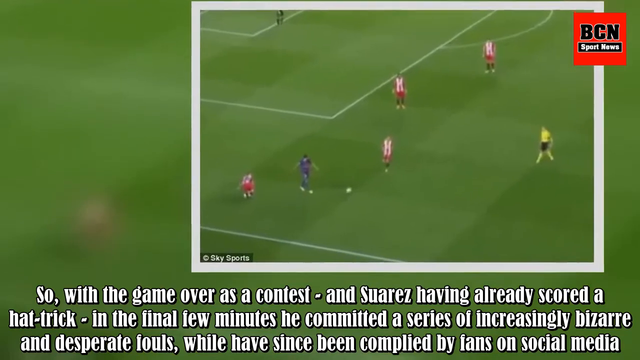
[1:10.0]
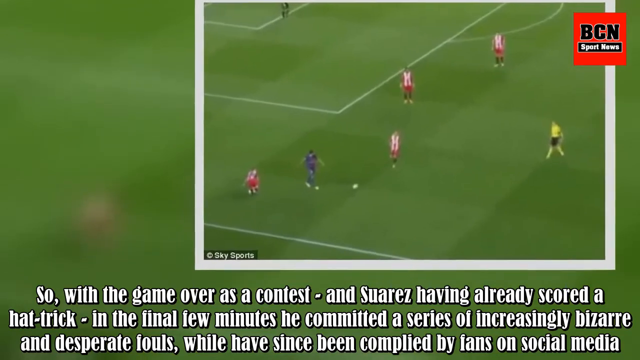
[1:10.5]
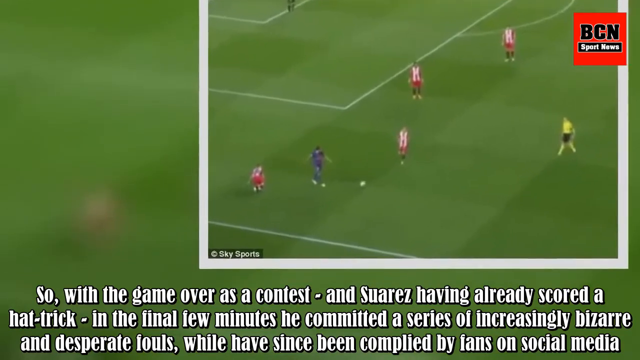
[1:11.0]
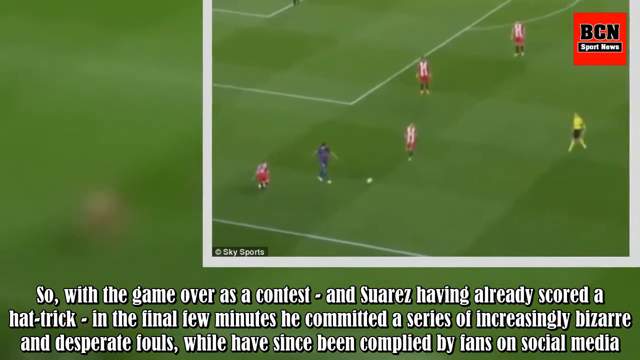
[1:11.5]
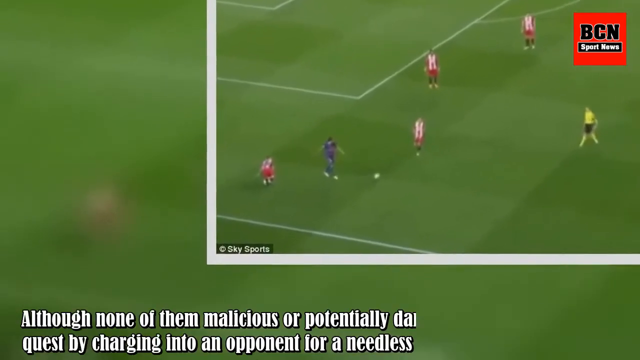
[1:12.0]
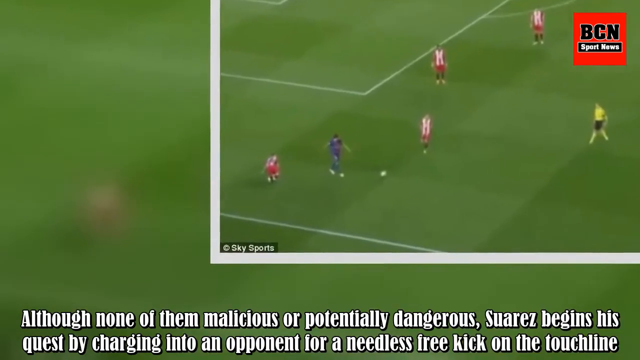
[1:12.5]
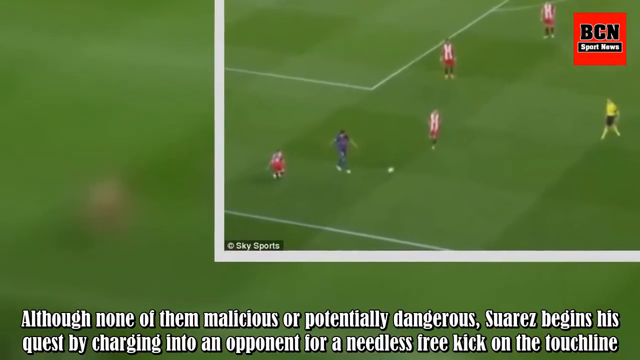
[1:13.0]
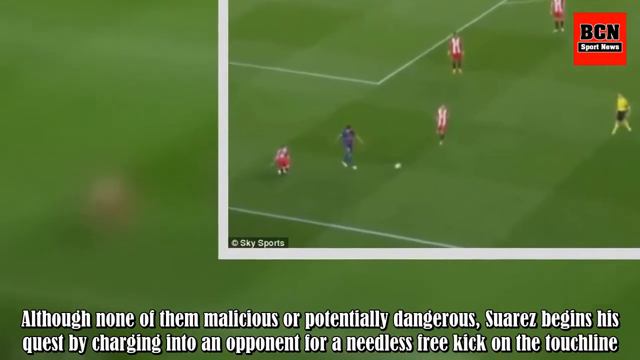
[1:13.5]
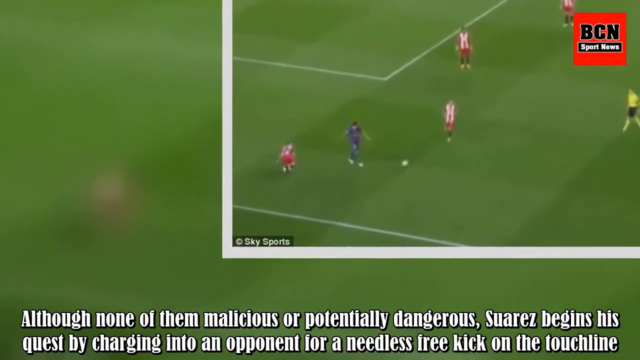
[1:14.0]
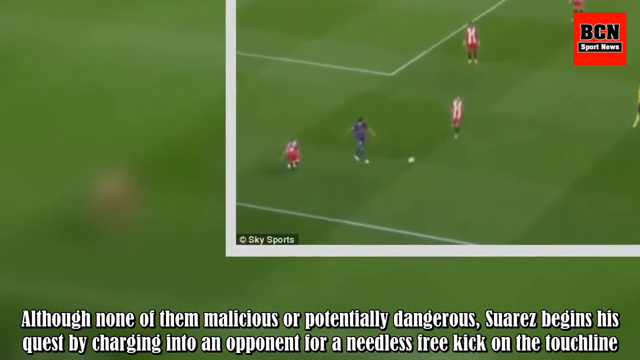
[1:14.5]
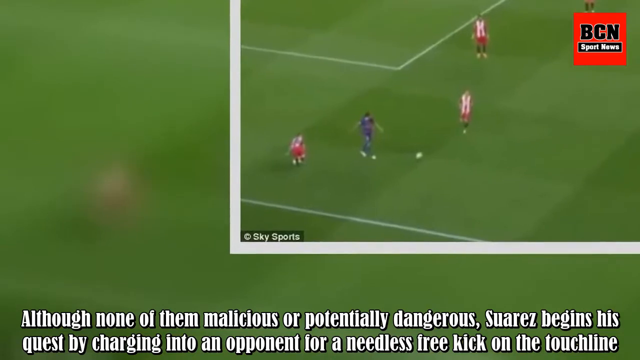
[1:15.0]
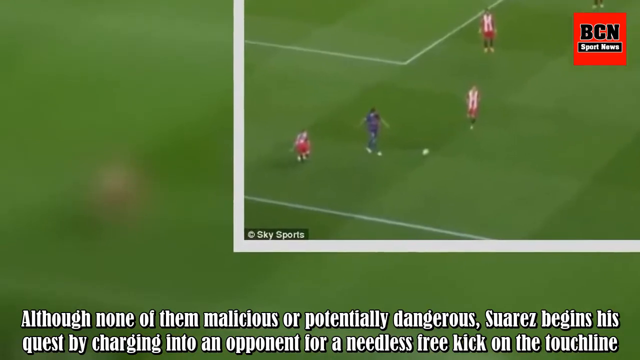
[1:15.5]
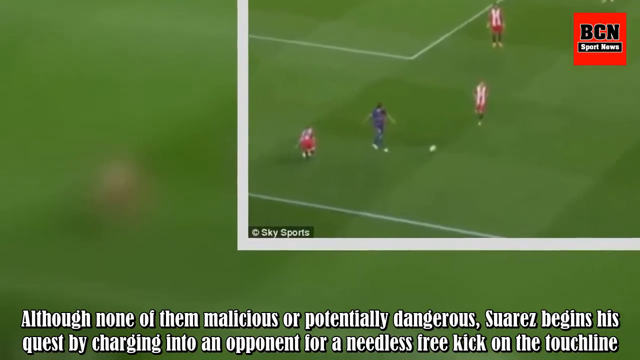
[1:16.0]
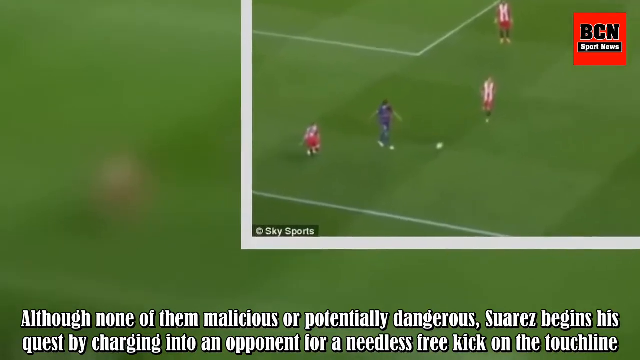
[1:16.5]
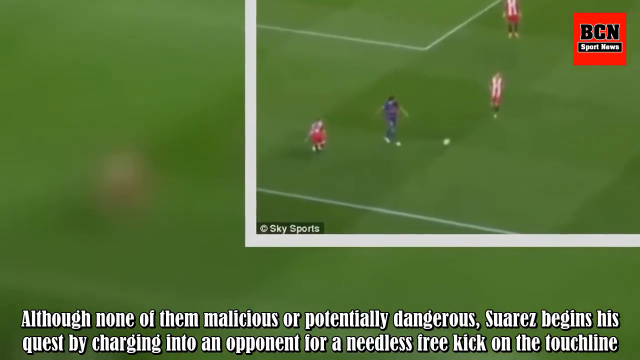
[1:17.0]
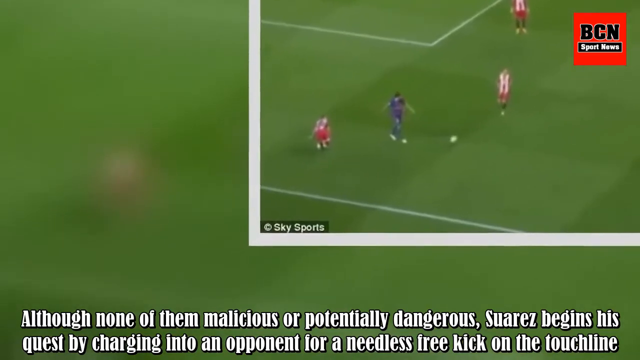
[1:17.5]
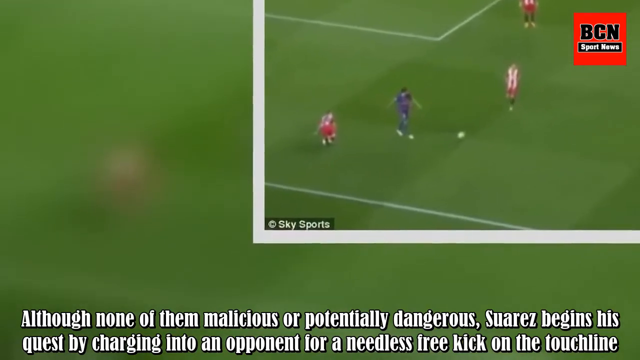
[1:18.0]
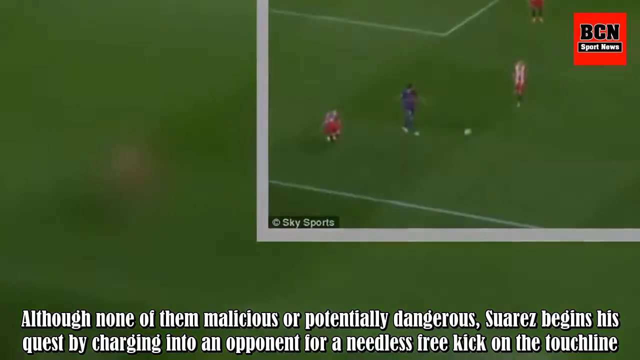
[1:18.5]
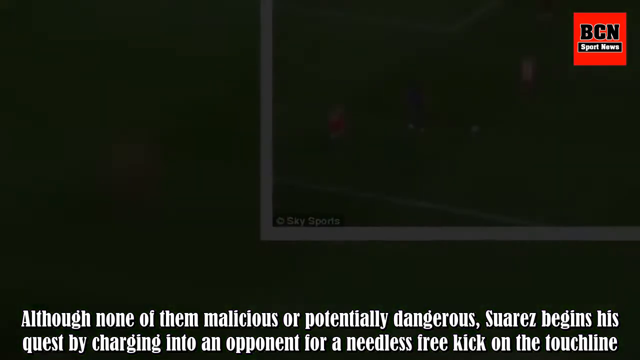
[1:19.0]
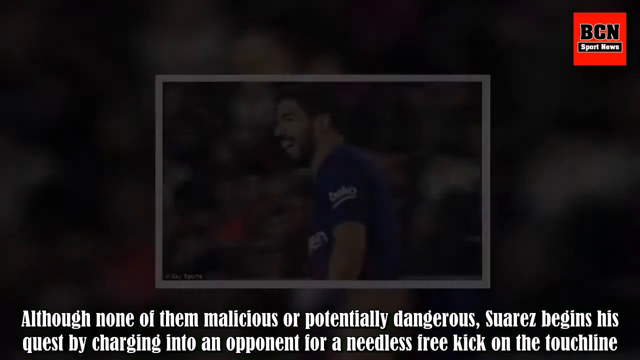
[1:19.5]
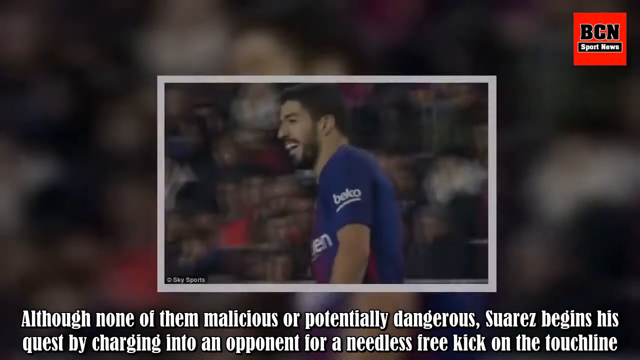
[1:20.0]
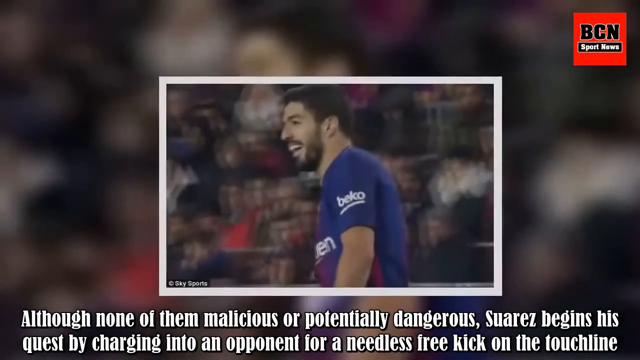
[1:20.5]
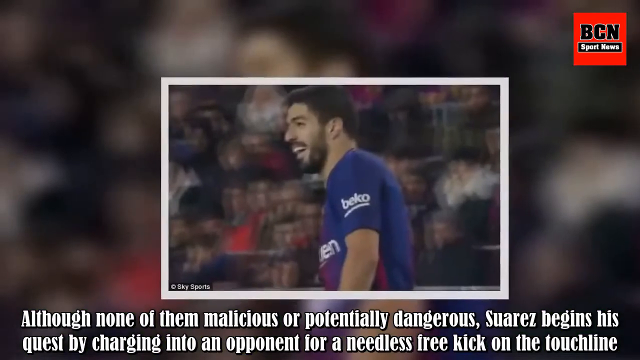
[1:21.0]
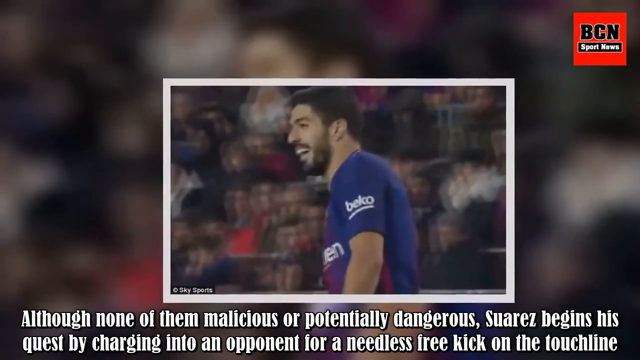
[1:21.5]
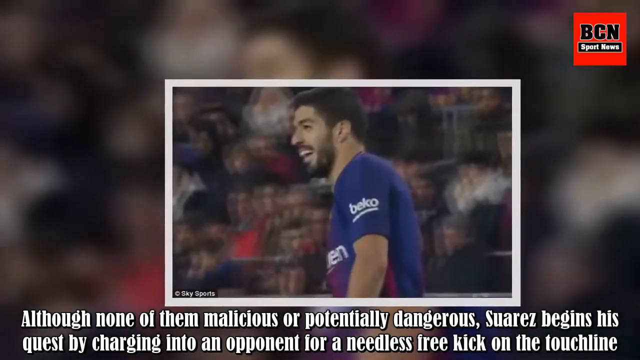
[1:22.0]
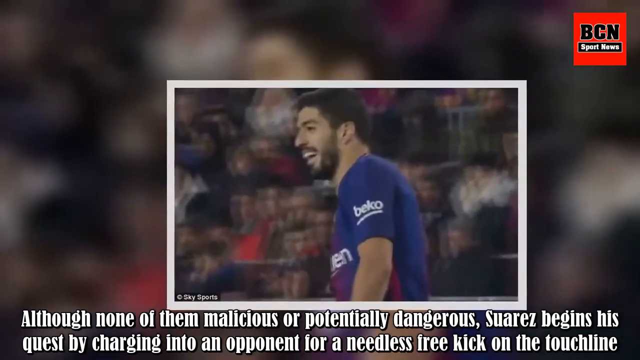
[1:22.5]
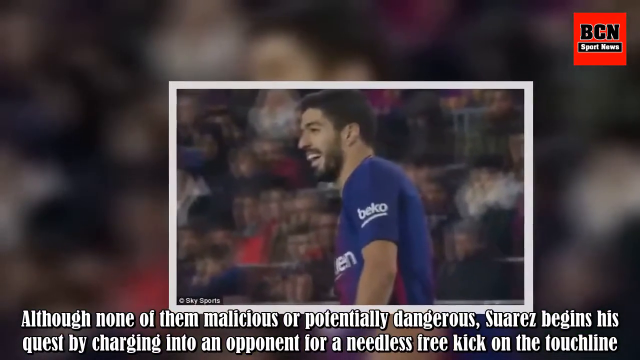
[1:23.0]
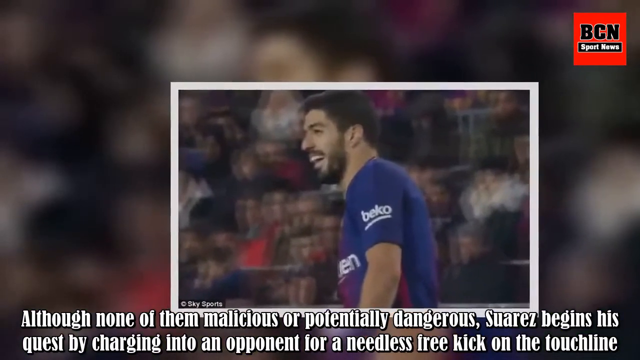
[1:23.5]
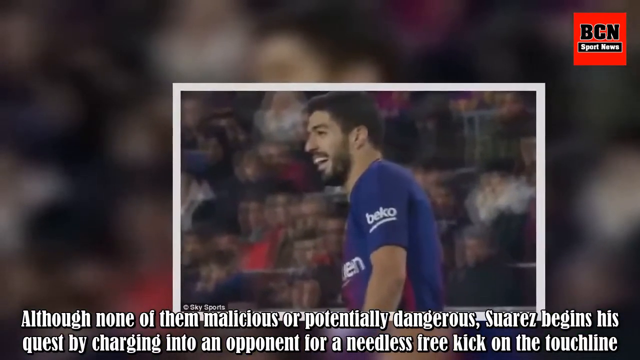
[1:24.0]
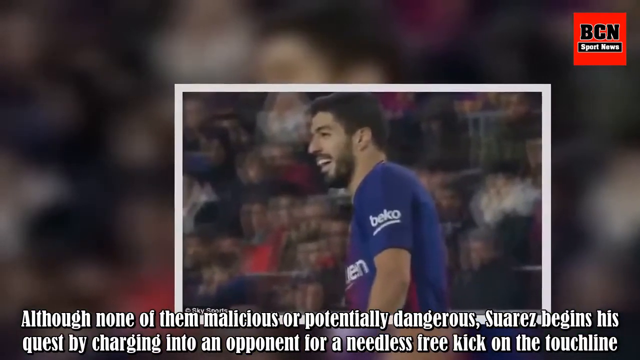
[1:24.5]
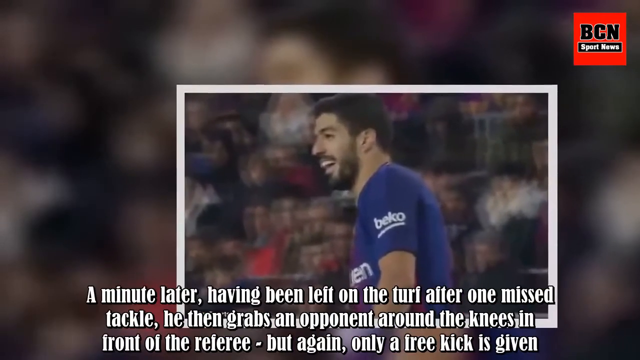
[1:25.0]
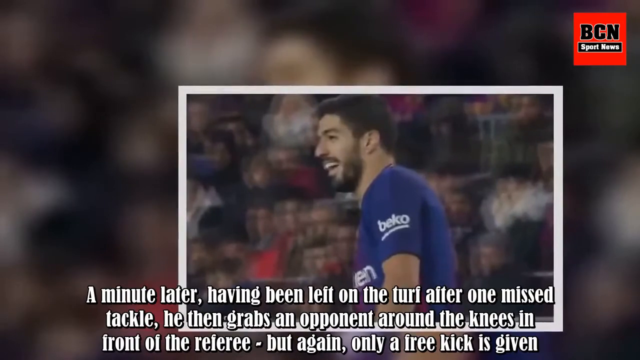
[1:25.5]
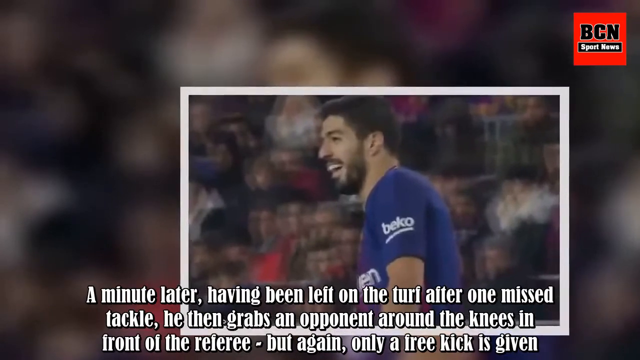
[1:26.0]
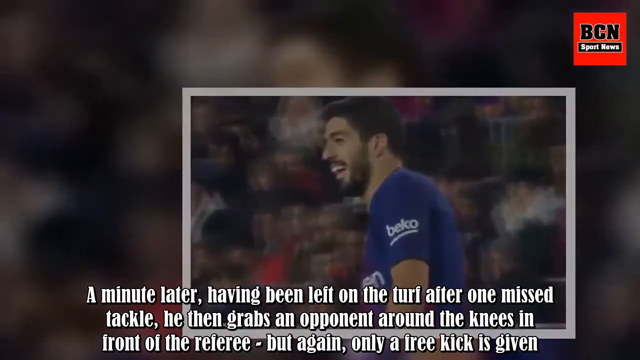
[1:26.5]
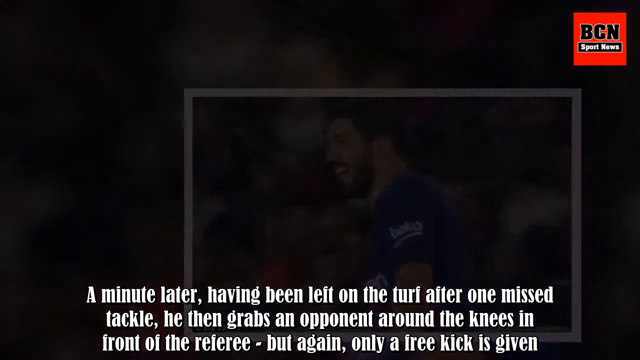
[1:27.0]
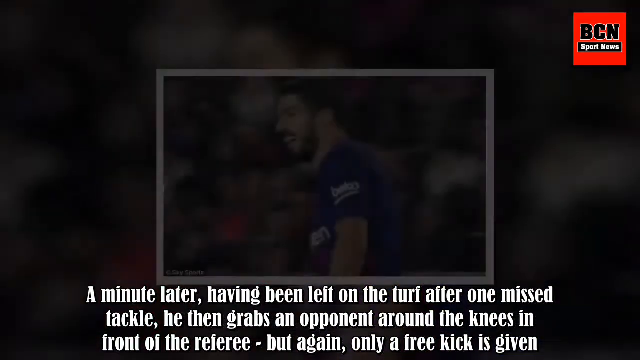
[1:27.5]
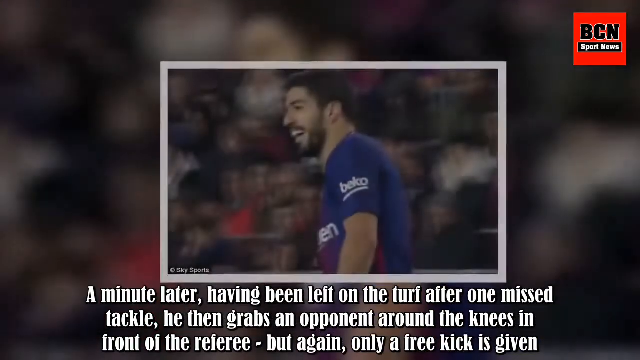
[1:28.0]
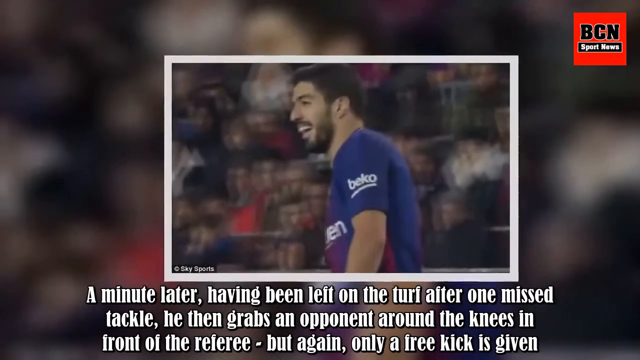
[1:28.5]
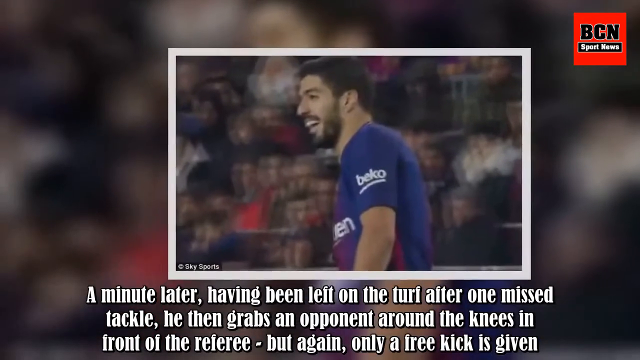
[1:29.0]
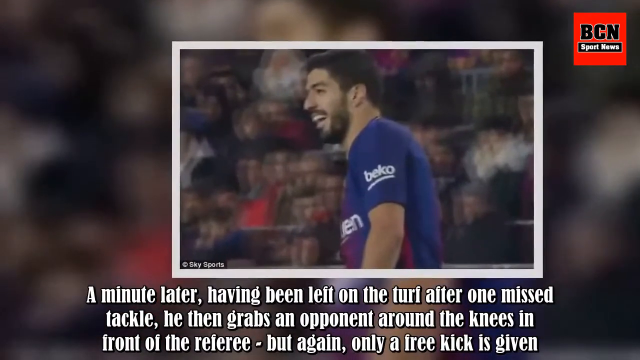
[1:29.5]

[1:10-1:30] Different pictures and images from a soccer game are shown. Text at the bottom of the screen reads "So with the game over as a contest and Suarez having already scored a hat-trick in the final few minutes, he committed a series of increasingly bizarre and desperate fouls." The text changes to "Although none of them malicious or potentially dangerous, Suarez begins his quest by charging into an opponent for a needless free kick on the touchline." The view zooms in on an image of a player smiling. Text then reads "a minute later, having been left on the turf" and "he then grabs an opponent around the knees in front of the referee but again only a free kick." "BCN Sports News" remains in a red box in the corner.